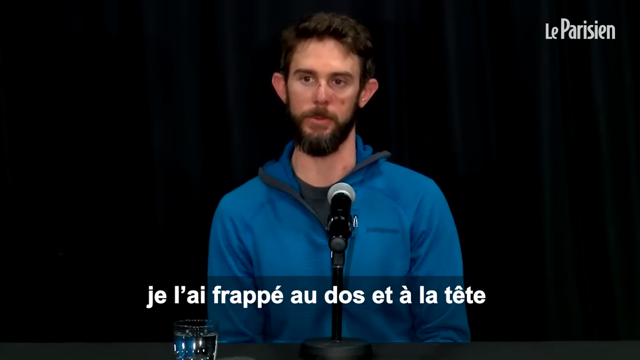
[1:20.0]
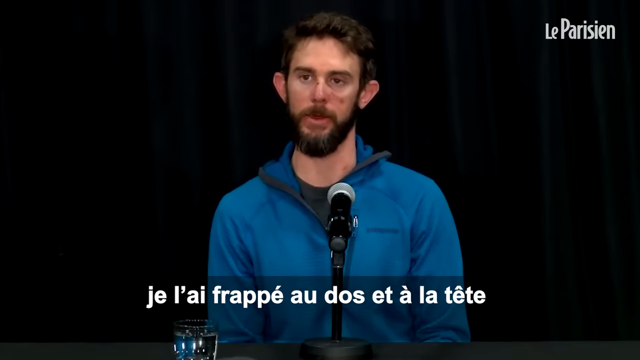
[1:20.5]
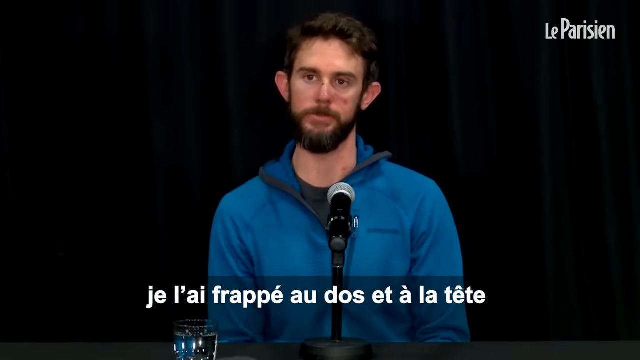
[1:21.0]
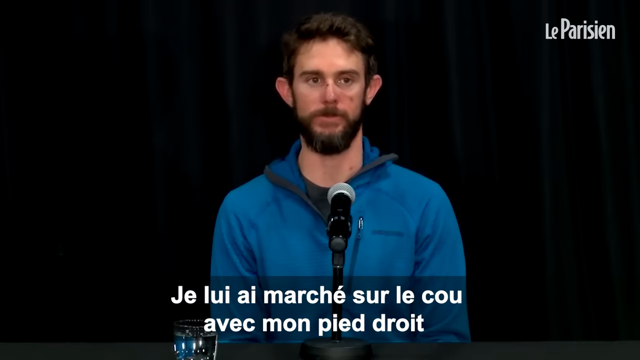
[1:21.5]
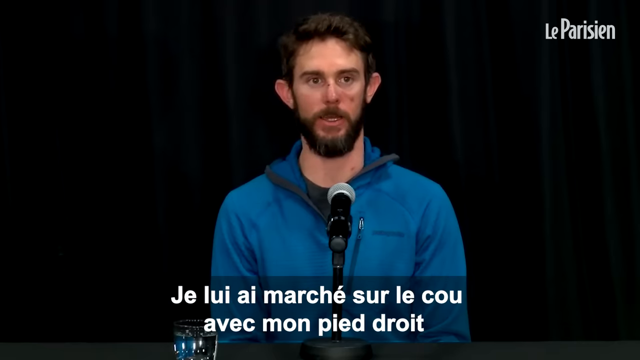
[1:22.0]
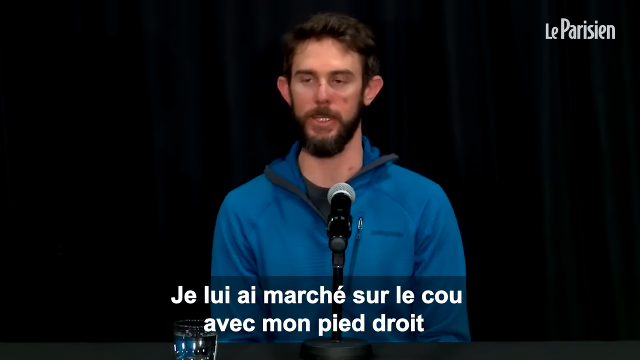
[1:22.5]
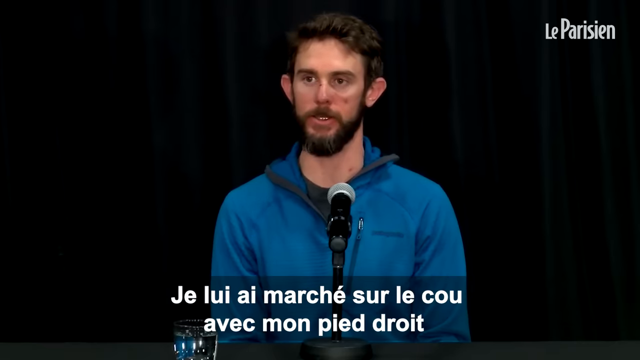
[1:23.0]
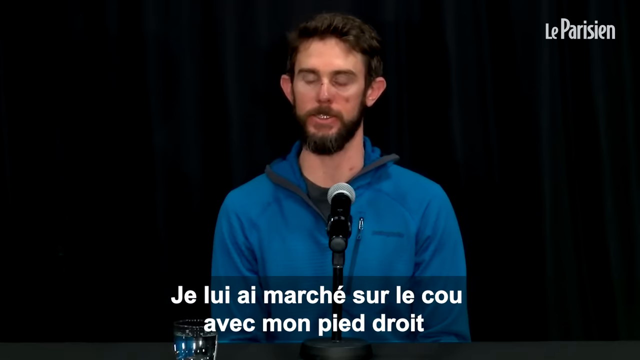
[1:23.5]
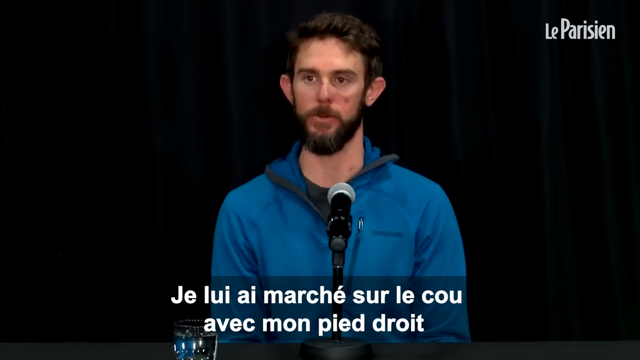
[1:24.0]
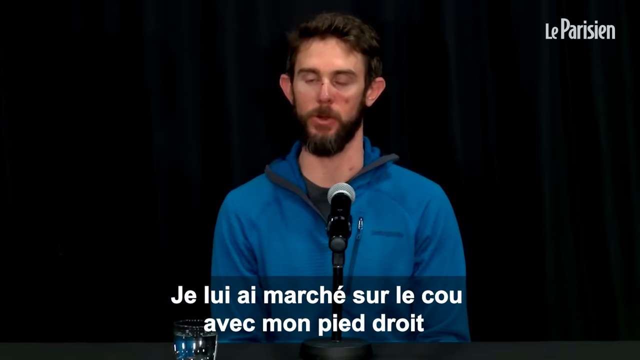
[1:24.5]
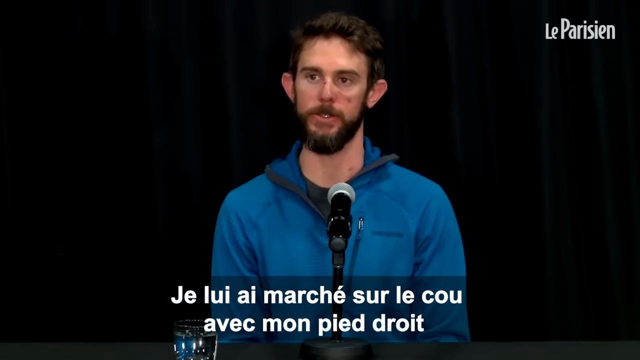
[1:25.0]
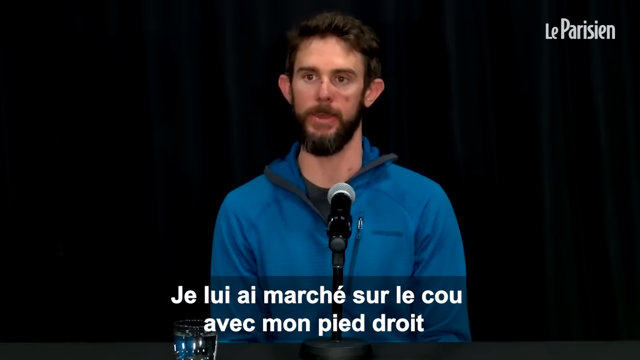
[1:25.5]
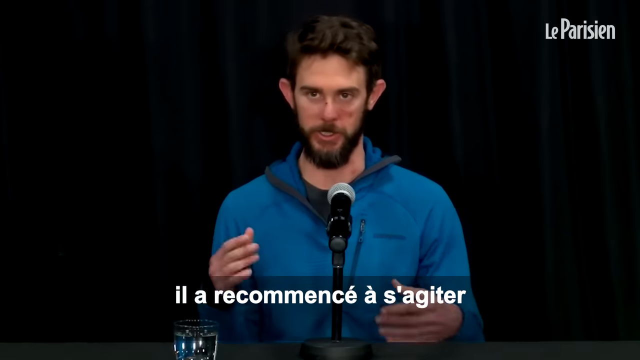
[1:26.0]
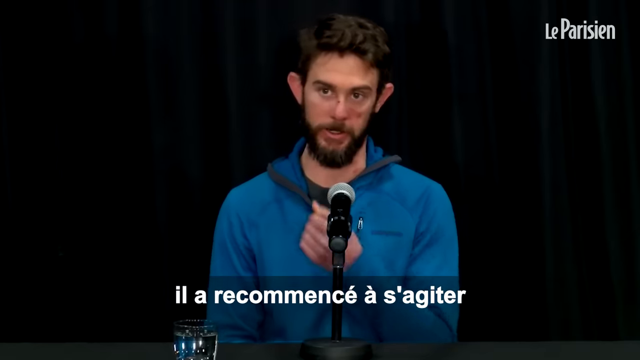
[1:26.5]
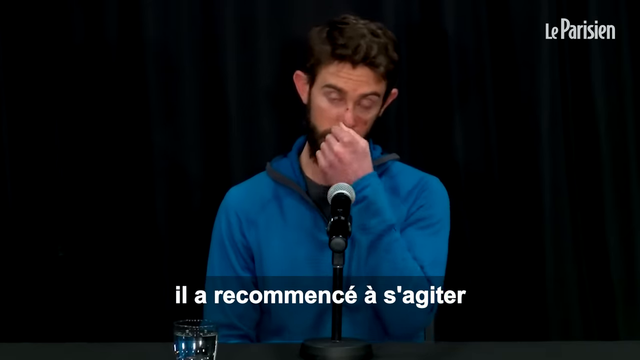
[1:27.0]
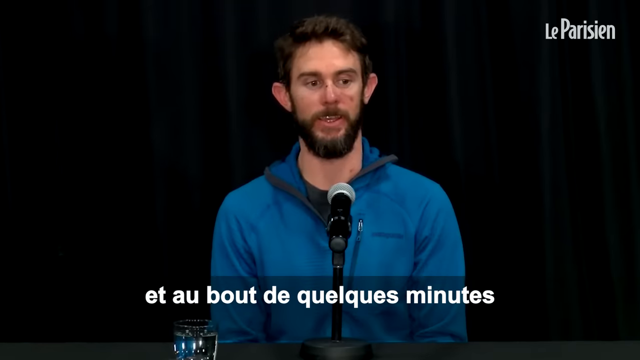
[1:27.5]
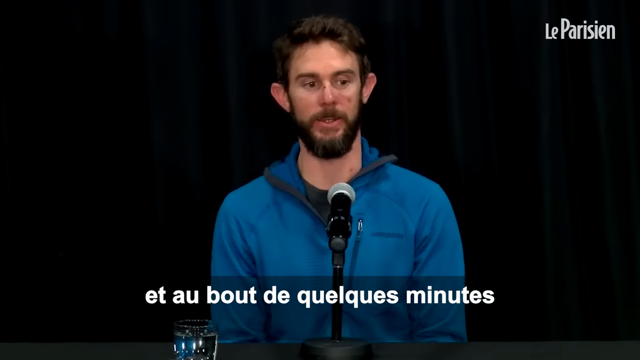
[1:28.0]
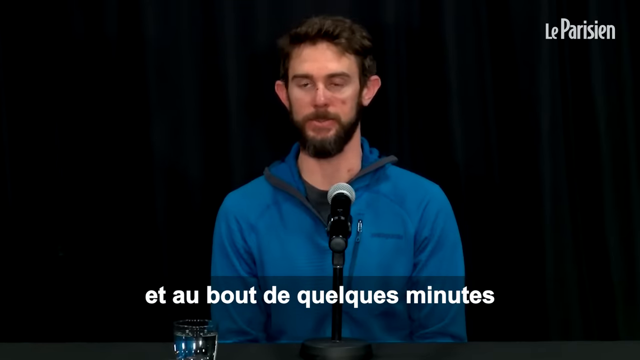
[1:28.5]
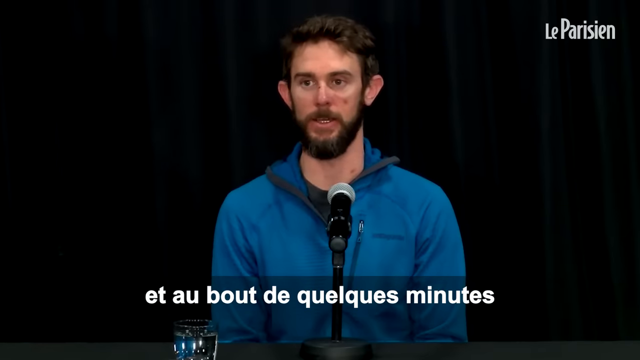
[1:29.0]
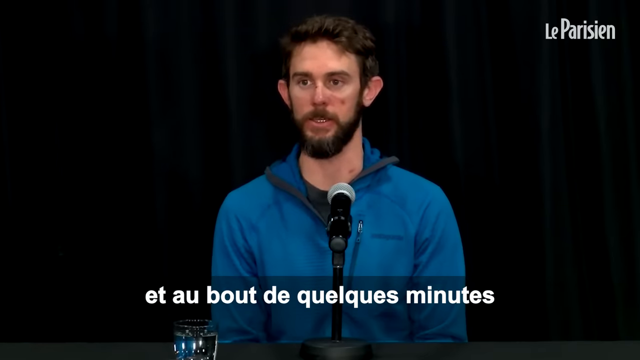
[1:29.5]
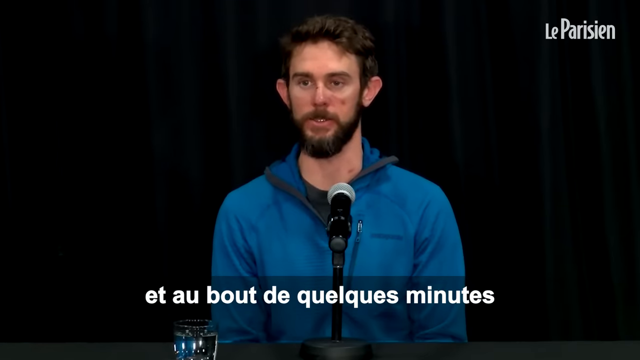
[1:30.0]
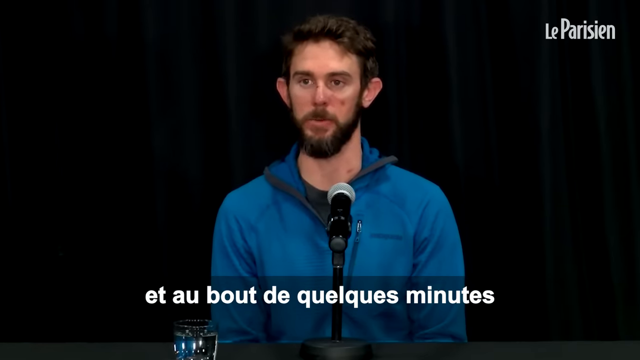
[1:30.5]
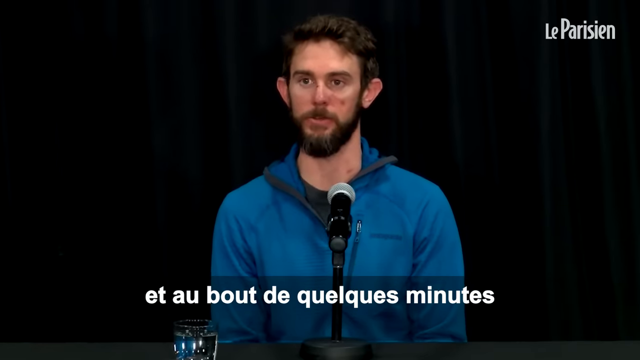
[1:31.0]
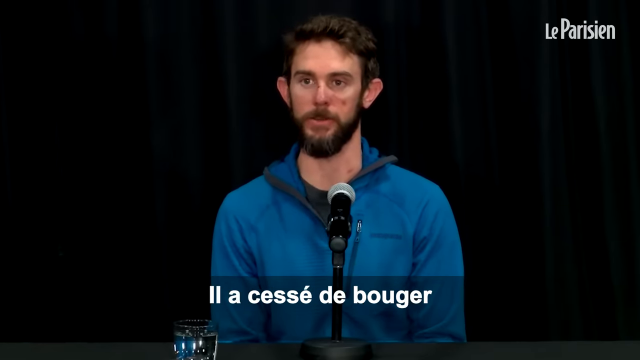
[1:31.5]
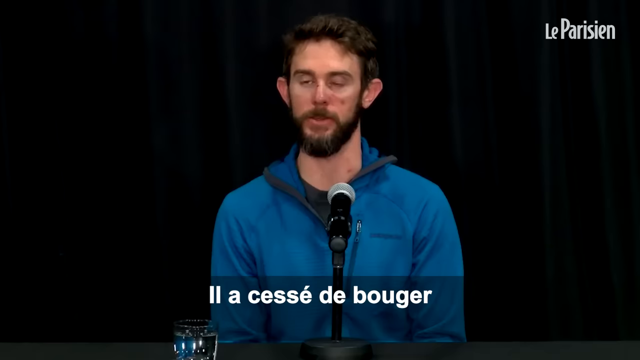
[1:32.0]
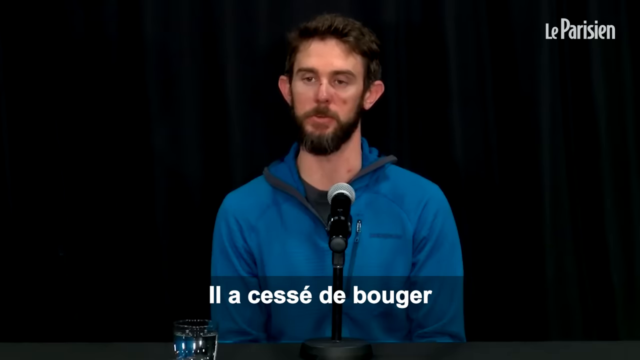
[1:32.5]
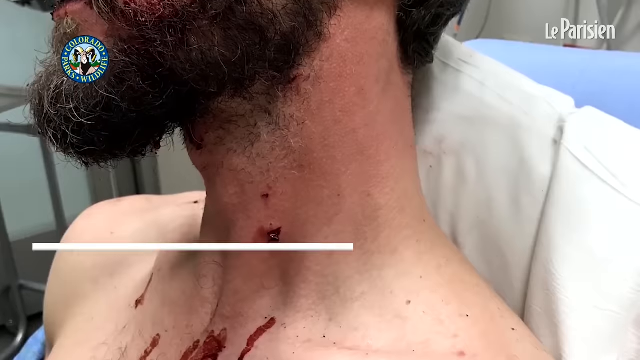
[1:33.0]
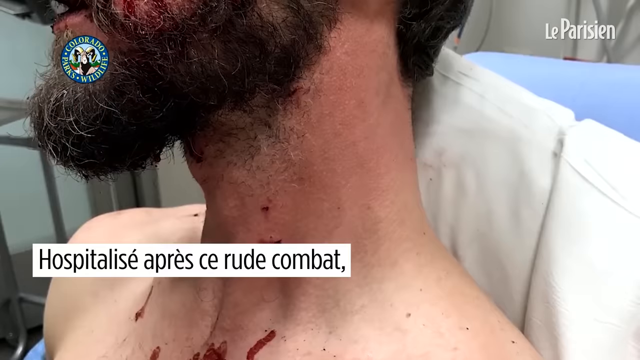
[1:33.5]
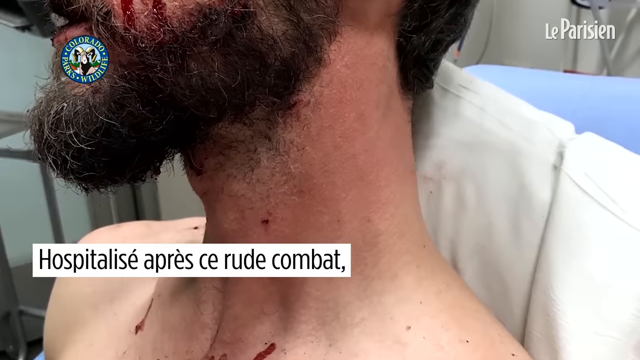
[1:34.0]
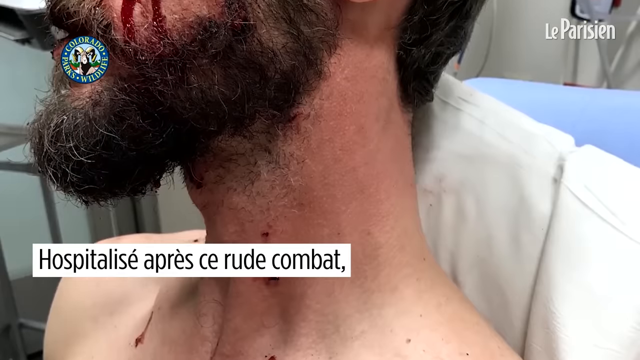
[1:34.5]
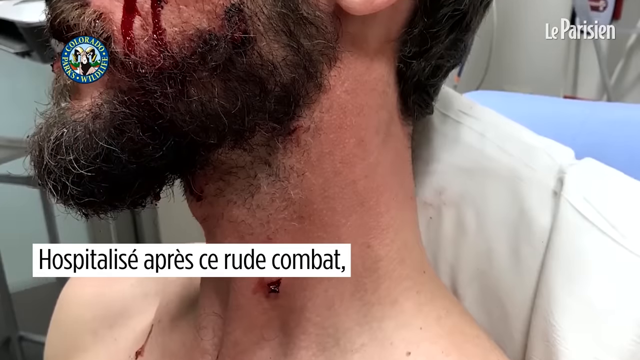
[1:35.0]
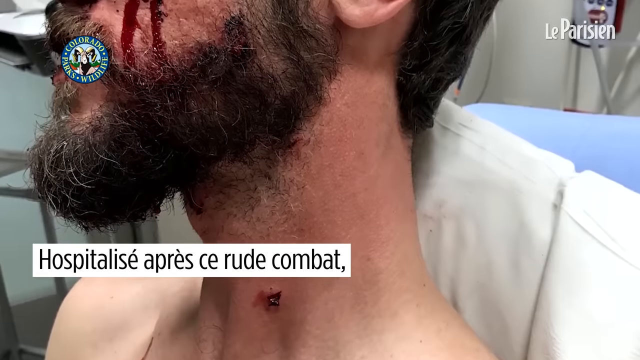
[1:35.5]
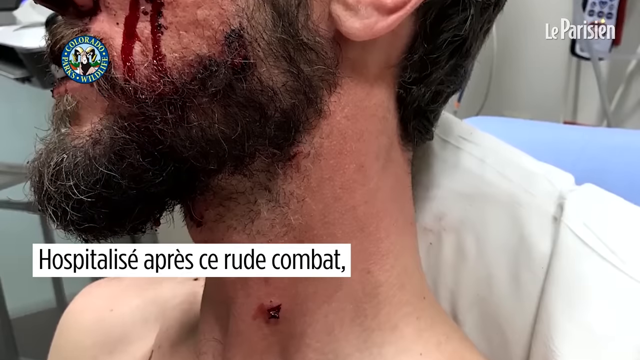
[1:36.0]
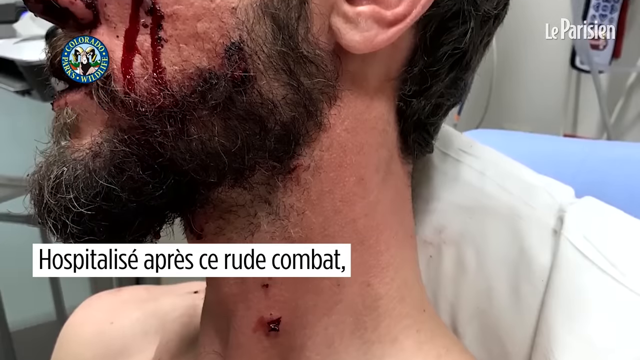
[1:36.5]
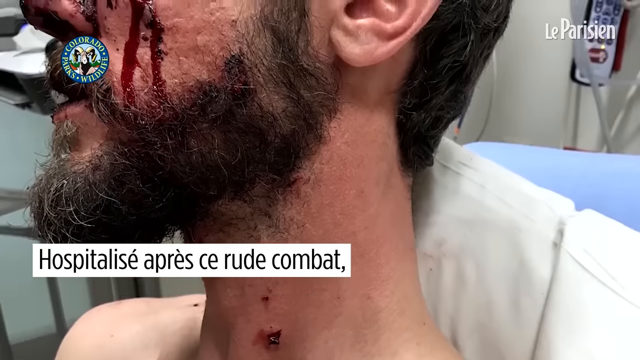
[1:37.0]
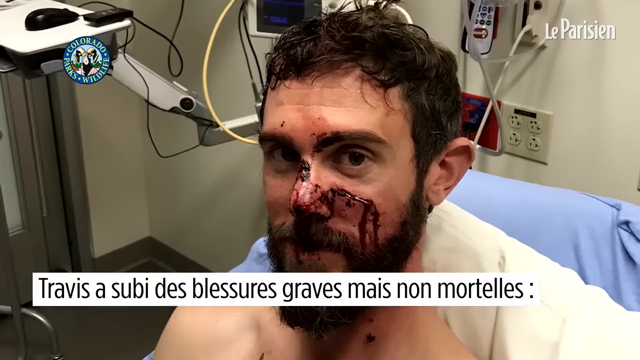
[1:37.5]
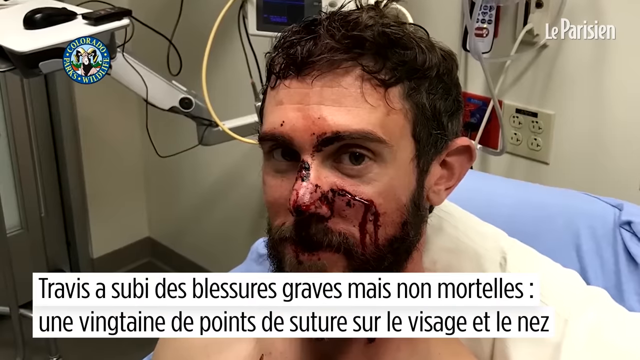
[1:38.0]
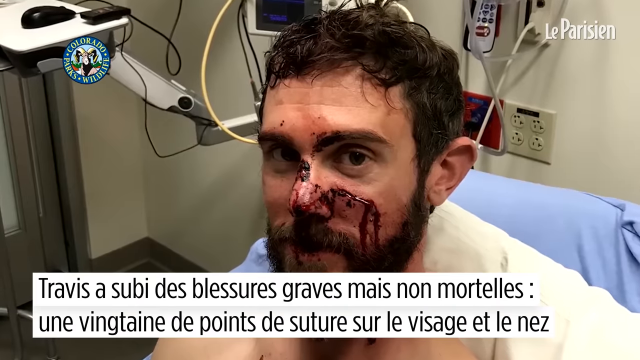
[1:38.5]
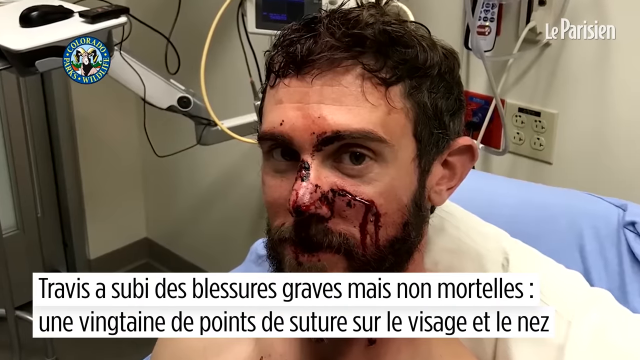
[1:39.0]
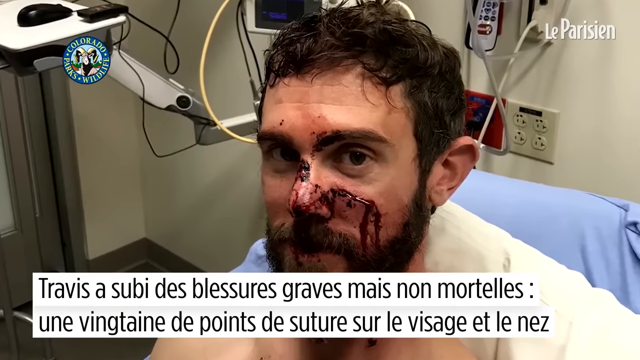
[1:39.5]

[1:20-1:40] The man sits in the center of the screen in a blue jacket with a black shirt underneath. He has short brownish-blackish hair, a mustache and a beard, and sits in front of black curtains that take up the entire background. A logo at the top right says "La Parisienne." As he talks, white text in French on a black transparent background at the bottom of the screen changes every couple of seconds and every couple of lines. He moves his hands slowly and touches his nose as he speaks, looks around, sometimes shows his teeth, and blinks occasionally. The scene changes to a picture of the man sitting in a hospital bed, and the picture slowly pans up toward his face, showing blood on it. The scene then changes to another angle of the man sitting in bed with blood on his face.